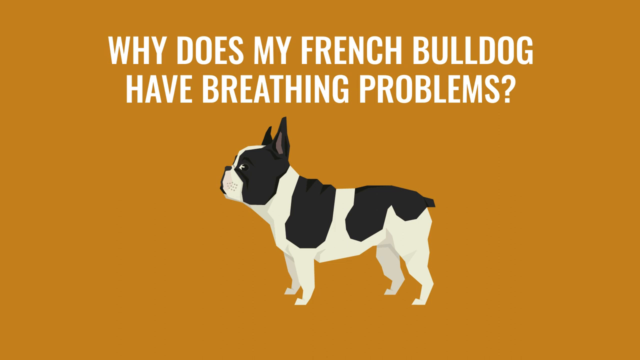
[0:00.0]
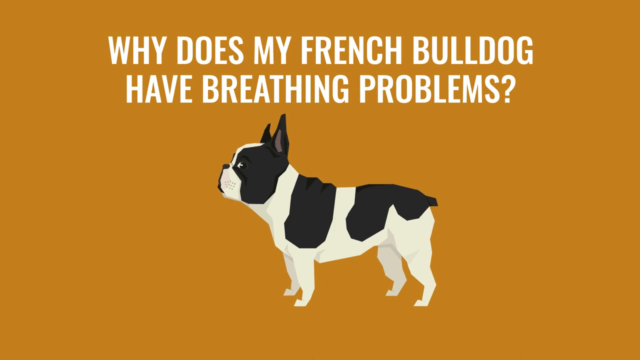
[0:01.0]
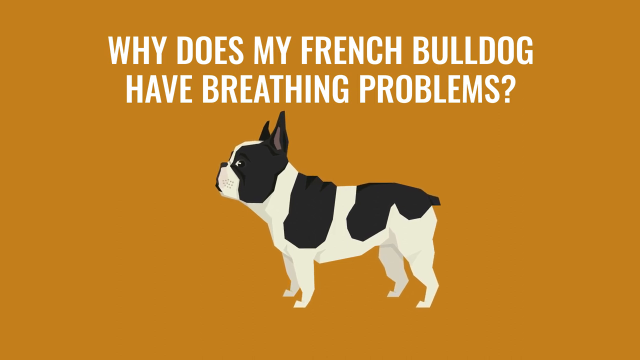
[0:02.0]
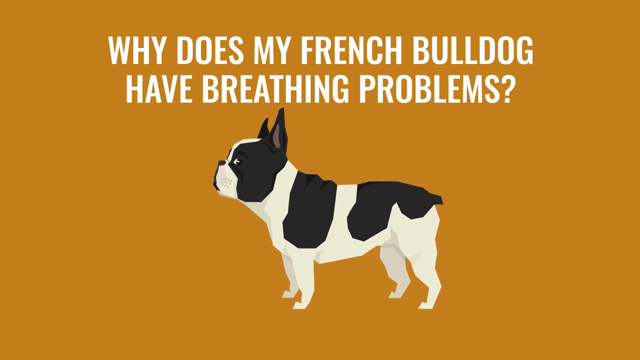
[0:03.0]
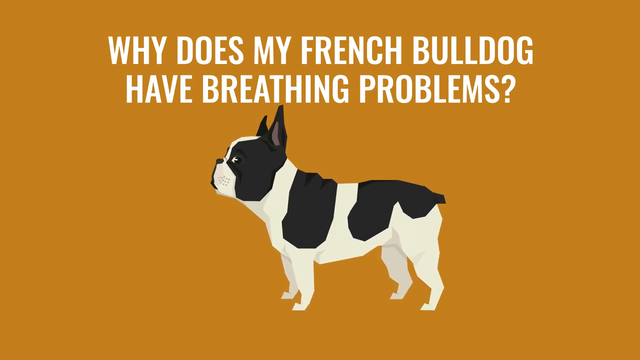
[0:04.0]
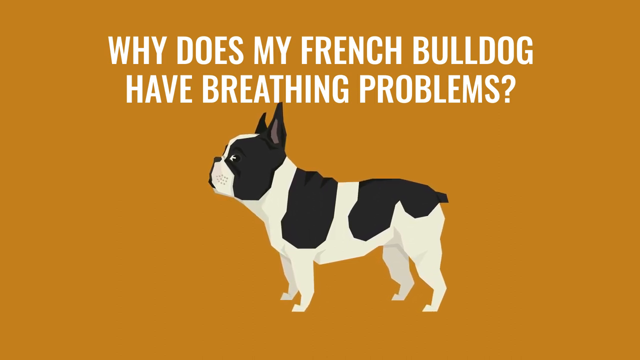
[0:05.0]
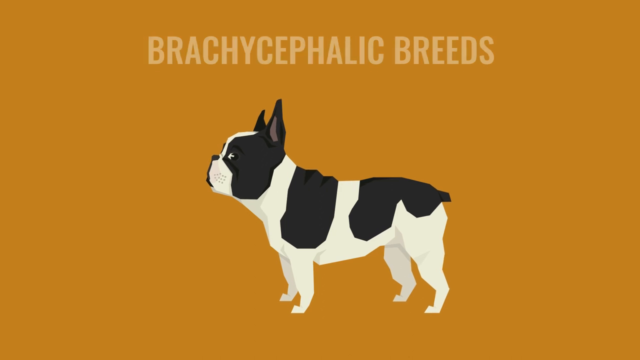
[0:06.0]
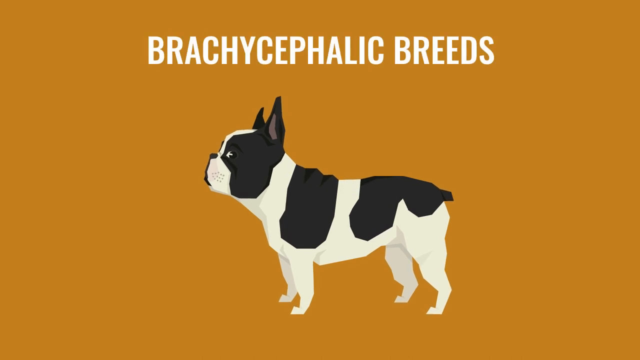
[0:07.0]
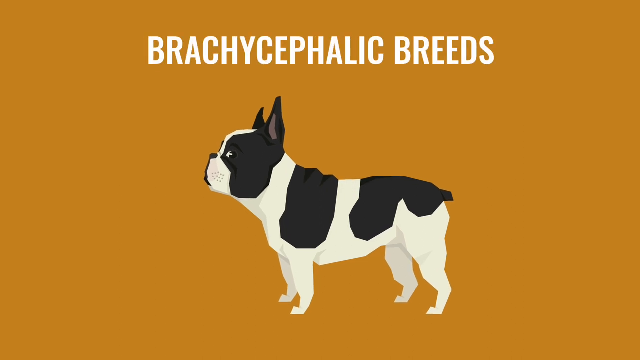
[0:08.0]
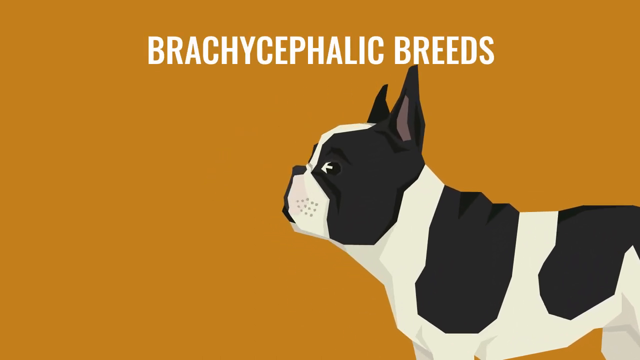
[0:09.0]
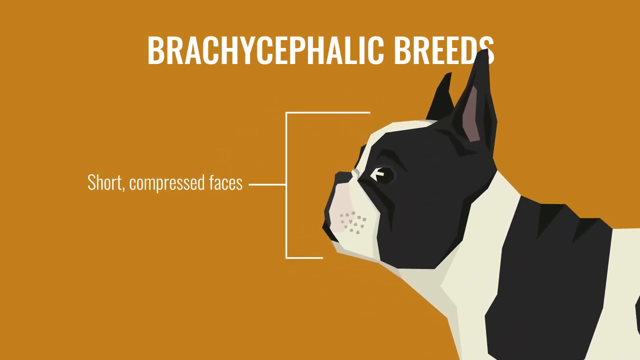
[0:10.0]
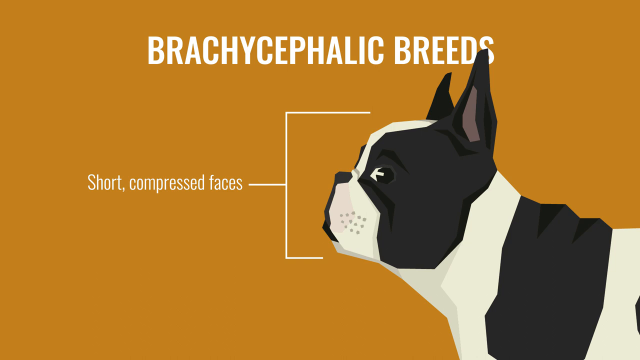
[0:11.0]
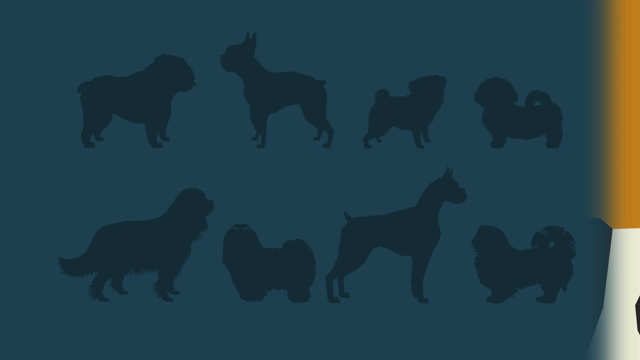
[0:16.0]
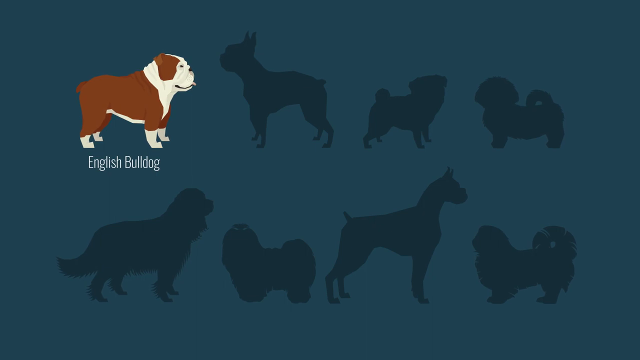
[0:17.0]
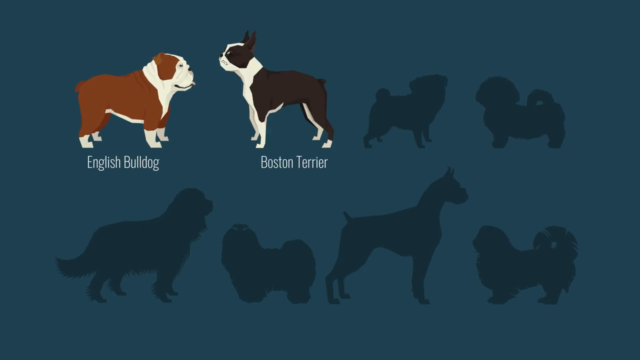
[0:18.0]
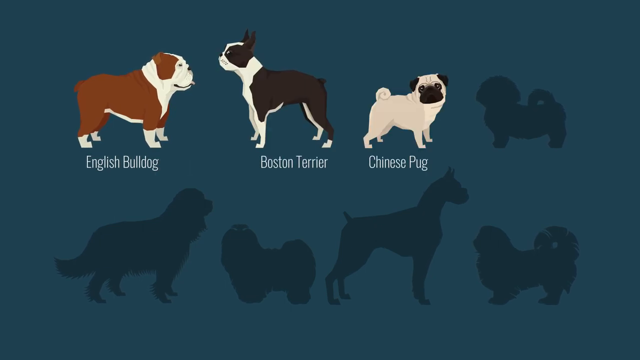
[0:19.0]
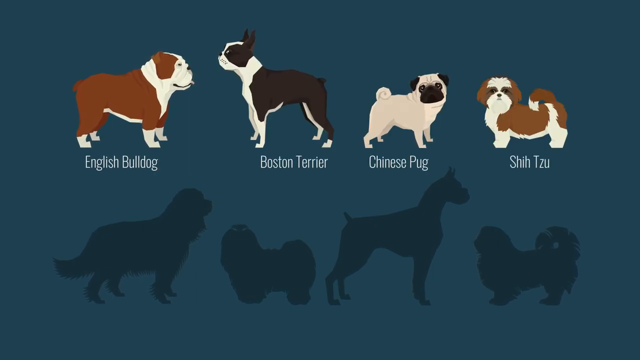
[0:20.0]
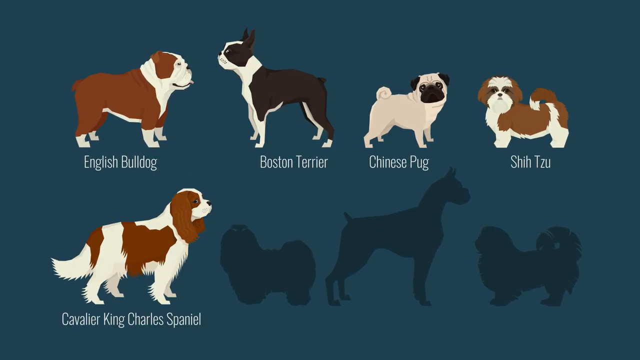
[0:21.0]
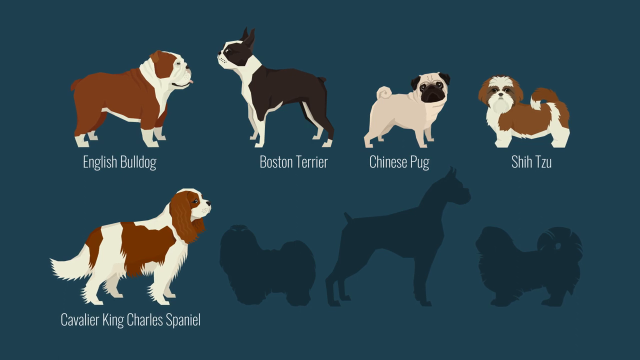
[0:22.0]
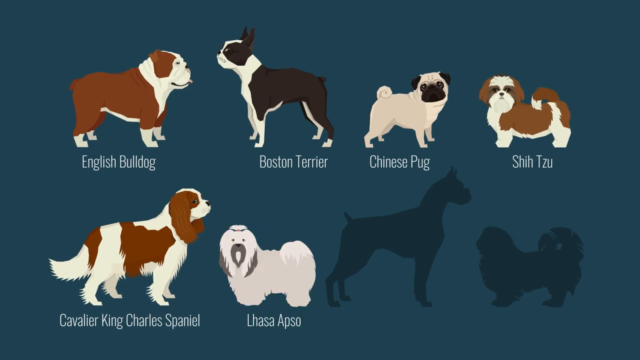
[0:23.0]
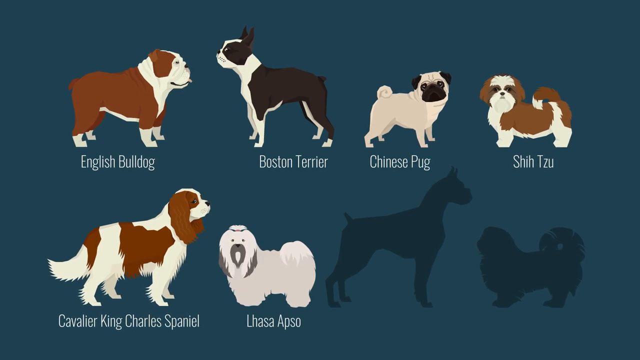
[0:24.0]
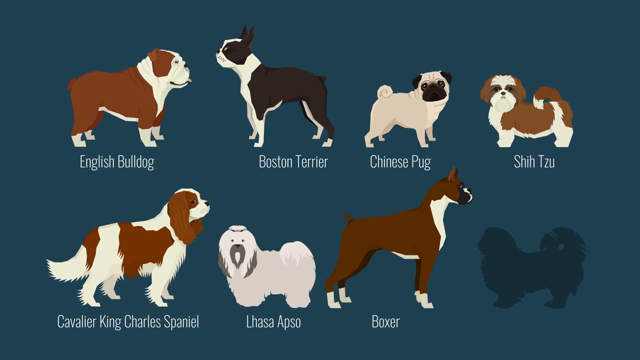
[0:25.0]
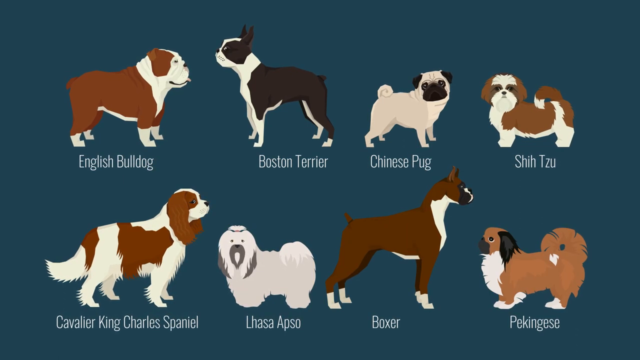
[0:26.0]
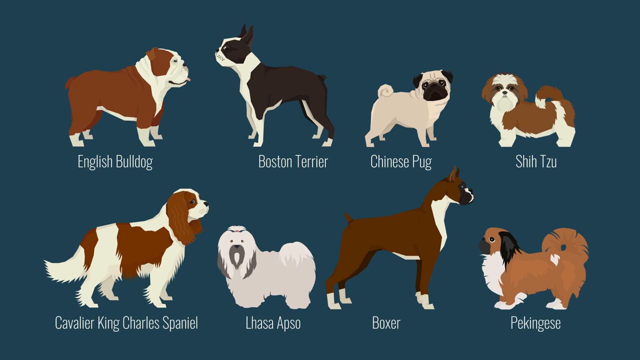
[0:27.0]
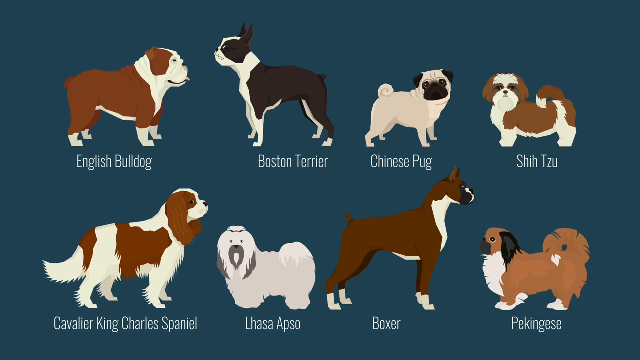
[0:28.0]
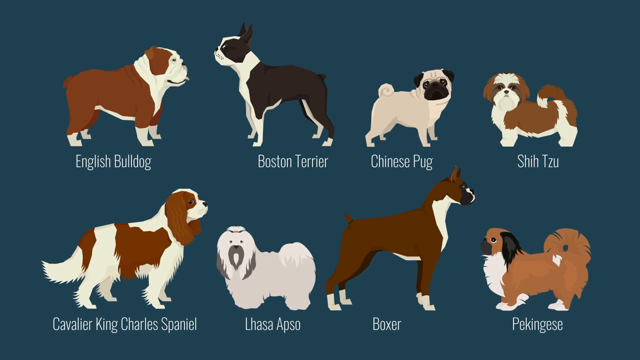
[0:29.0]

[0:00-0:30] The title reads "Why does my French bulldog have breathing problems?" in white, all-caps font on a dark yellow background, with a cartoon picture of a black and white bulldog at the bottom. The bulldog slowly gets larger while the title remains on screen, and then the text changes to "Brachycephalic breeds," again in white, all-caps font. A close-up of the bulldog's cartoon face appears with the caption "Short compressed faces" in white font, and white lines run from the caption to the picture of the dog. Several different types of dogs with short compressed faces are then shown: an English Bulldog, a Boston Terrier, a Chinese Pug, a Shih Tzu, a Cavalier King Charles Spaniel, a Paso Apso, a Boxer, and a Pekingese. As each caption appears, that cartoon dog turns from a silhouette into a full-colored dog.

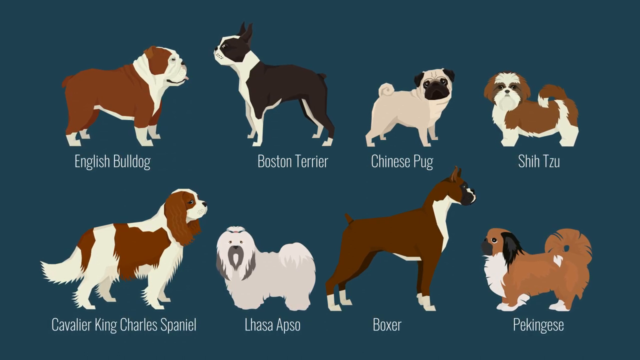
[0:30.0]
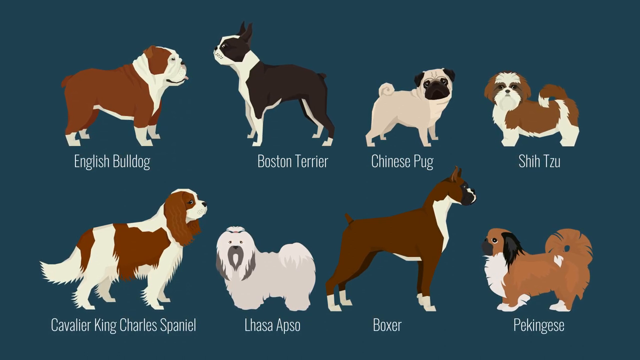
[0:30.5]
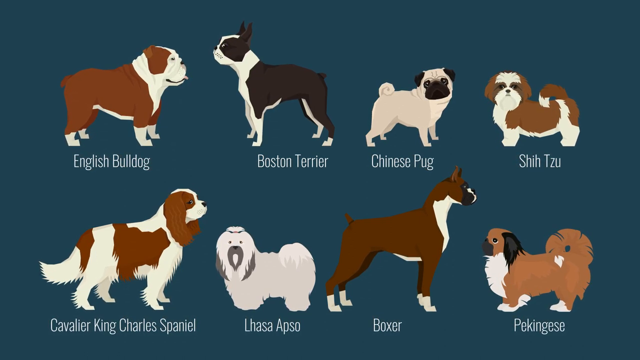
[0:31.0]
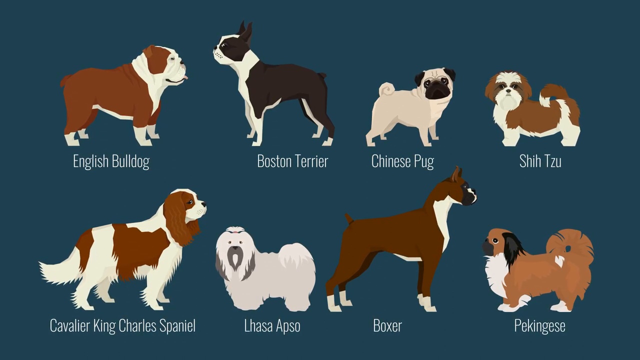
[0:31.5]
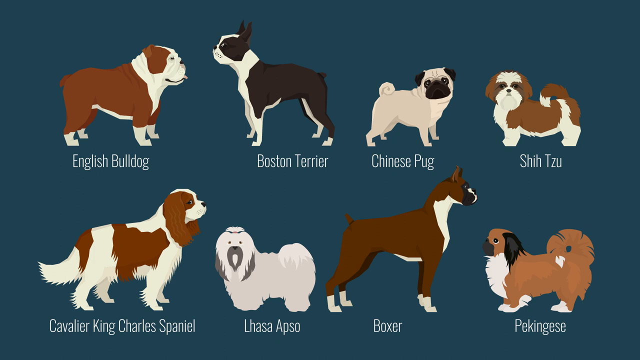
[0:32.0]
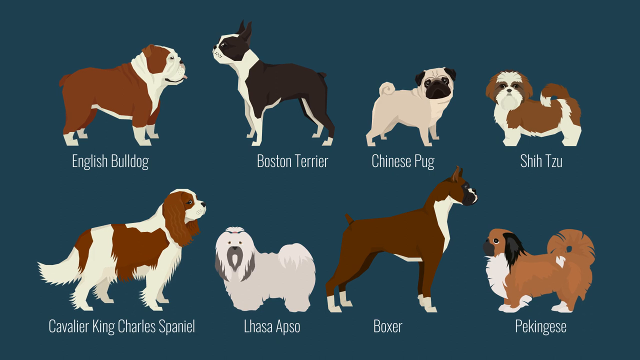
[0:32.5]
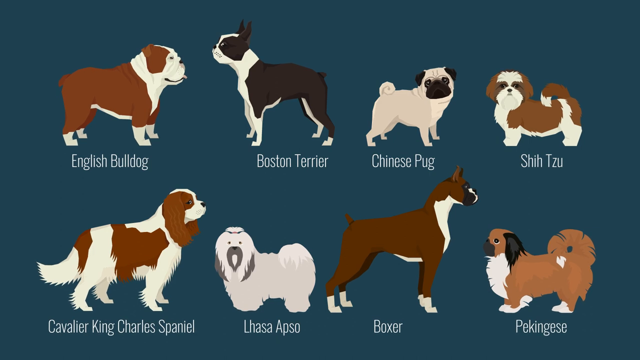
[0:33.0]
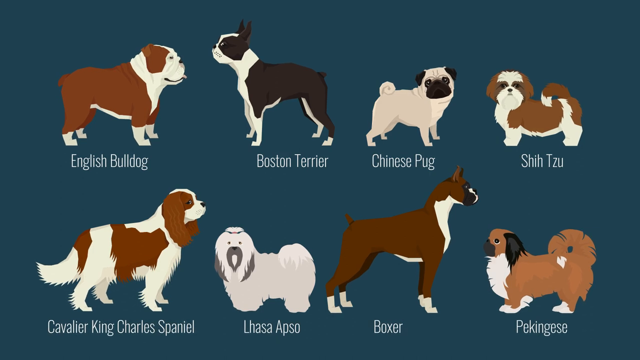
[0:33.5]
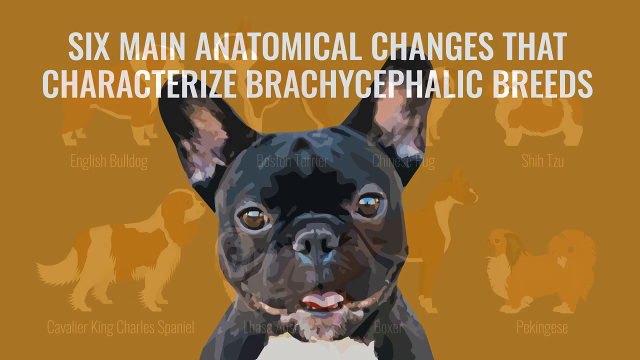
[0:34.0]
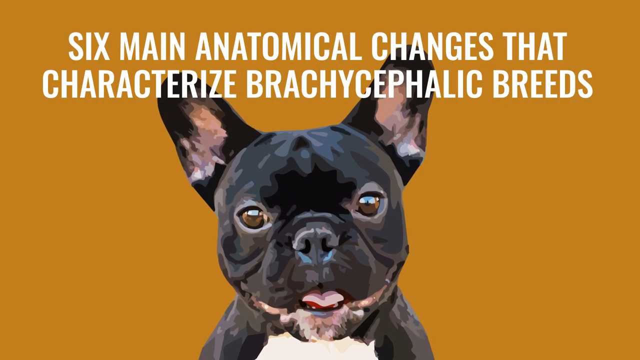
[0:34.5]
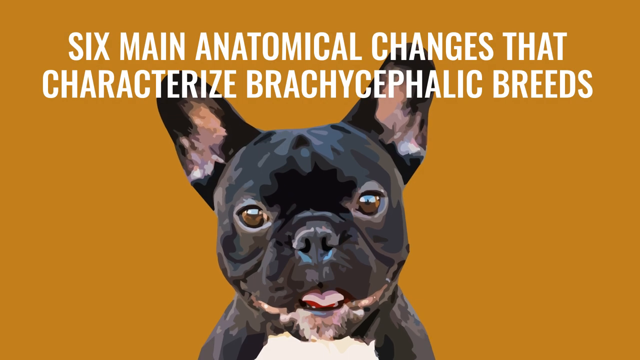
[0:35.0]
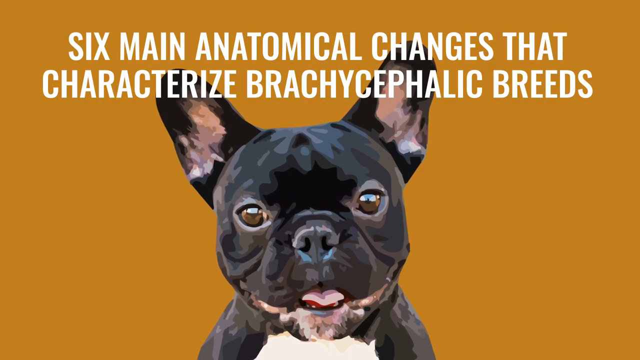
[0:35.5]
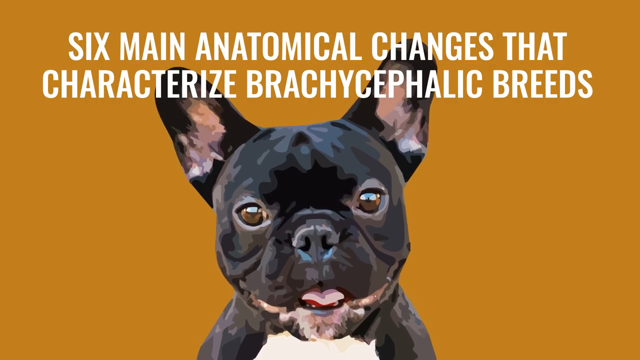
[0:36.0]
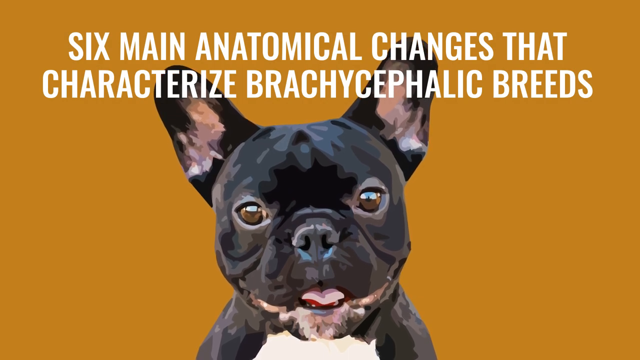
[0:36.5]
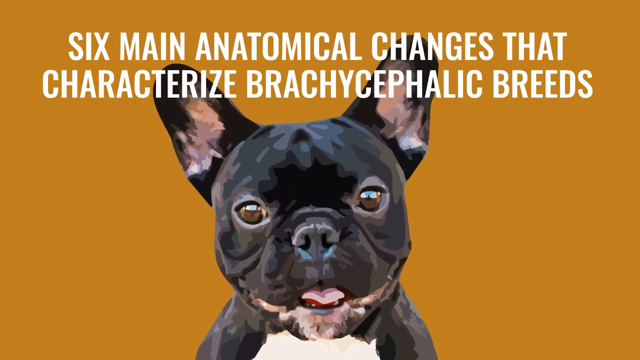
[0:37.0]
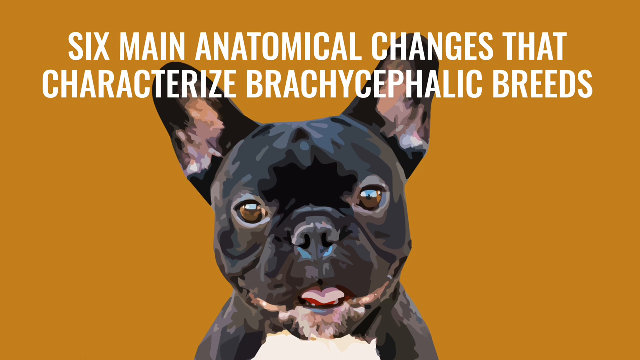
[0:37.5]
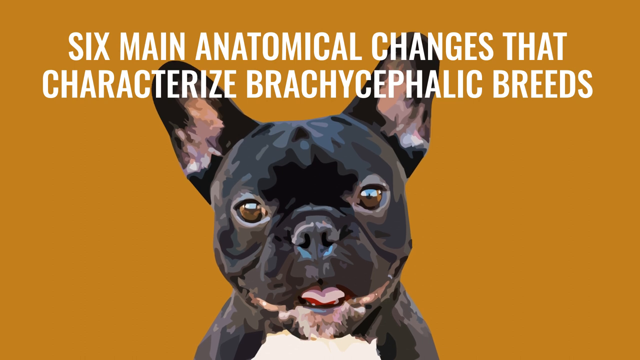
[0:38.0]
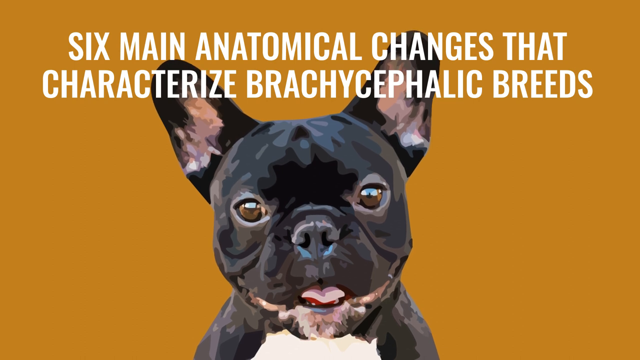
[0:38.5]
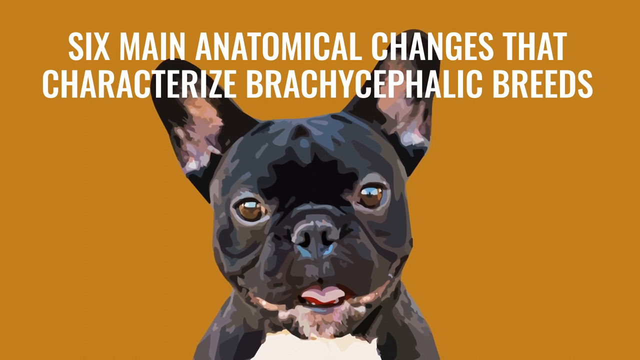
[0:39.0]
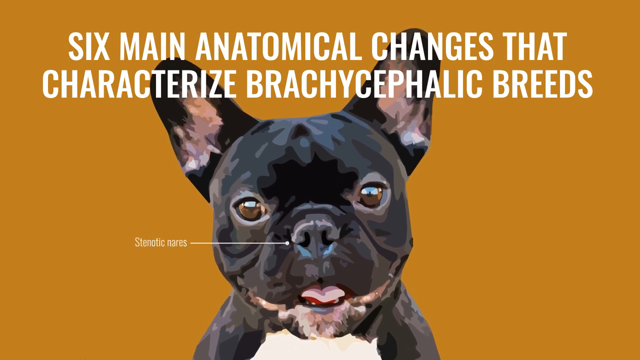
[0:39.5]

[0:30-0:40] The cartoon pictures of all the dogs remain on screen, with captions naming each type of dog. The screen then changes to a close-up of a bulldog in different shades of black and gray, with ears that seem to have pink insides, on the same dark yellow background. A caption in white font says "six main anatomical changes that characterize brachycephalic breeds." The bulldog slowly gets larger, a white line points at the nose, and the caption "stenotic nares" appears, with a white line ending in a little dot right by the nose.